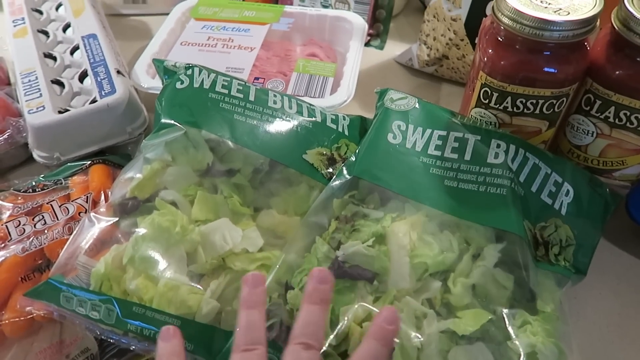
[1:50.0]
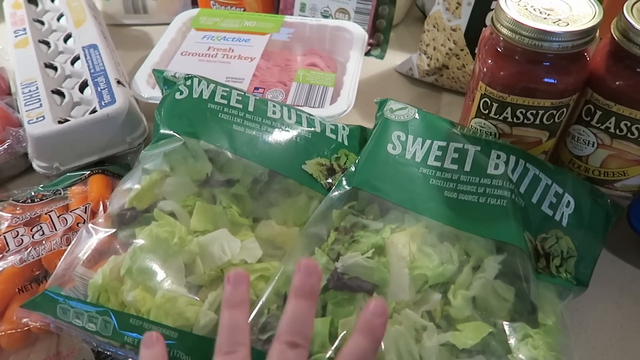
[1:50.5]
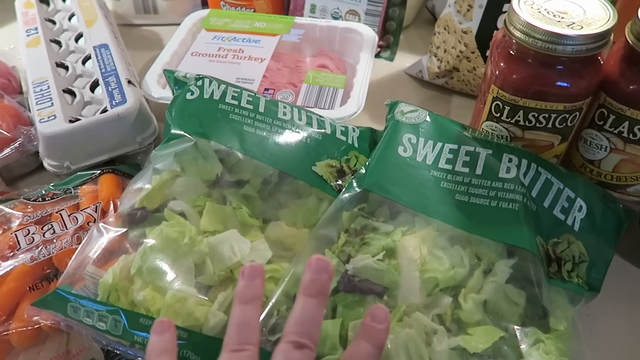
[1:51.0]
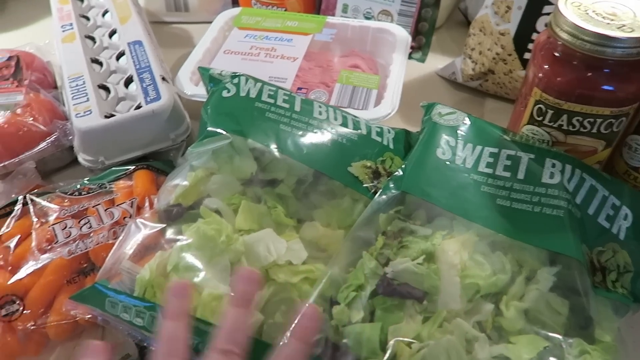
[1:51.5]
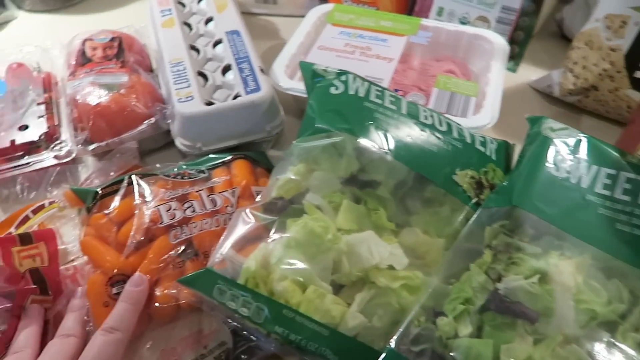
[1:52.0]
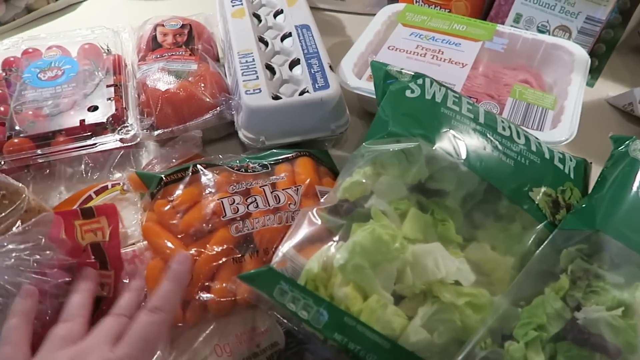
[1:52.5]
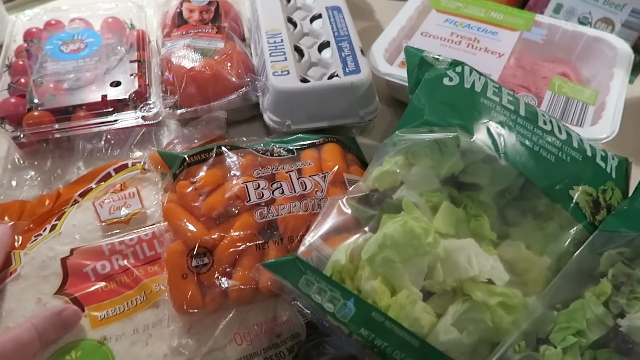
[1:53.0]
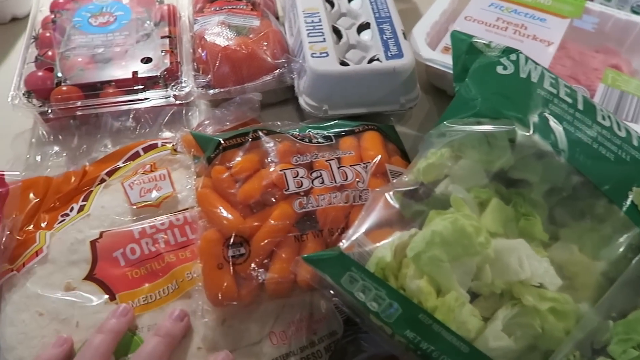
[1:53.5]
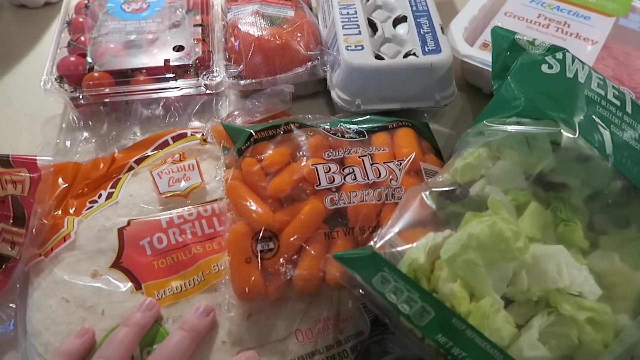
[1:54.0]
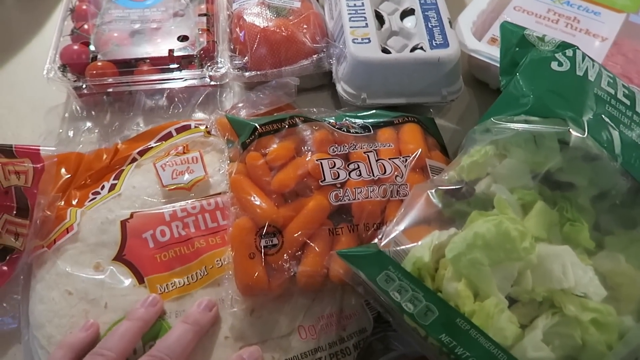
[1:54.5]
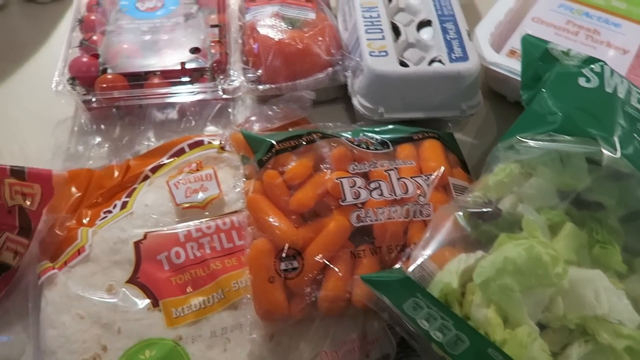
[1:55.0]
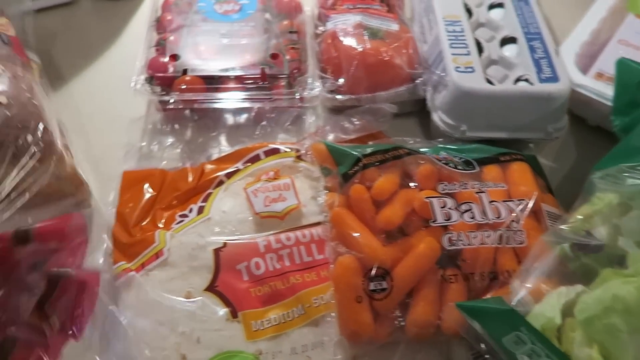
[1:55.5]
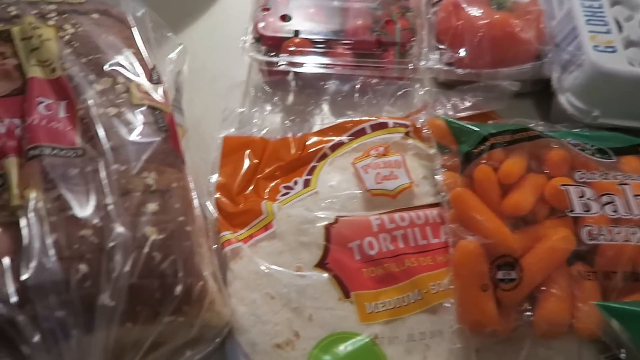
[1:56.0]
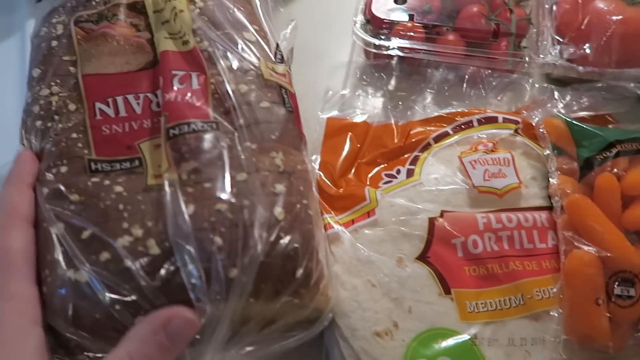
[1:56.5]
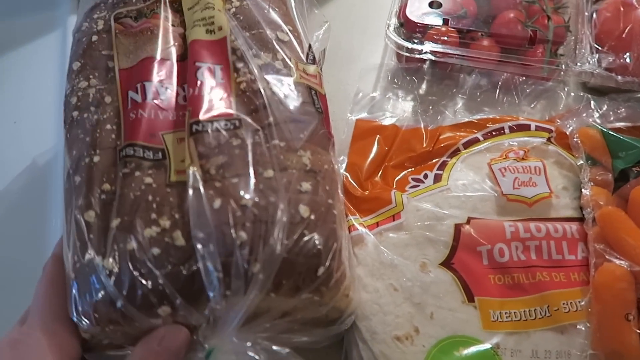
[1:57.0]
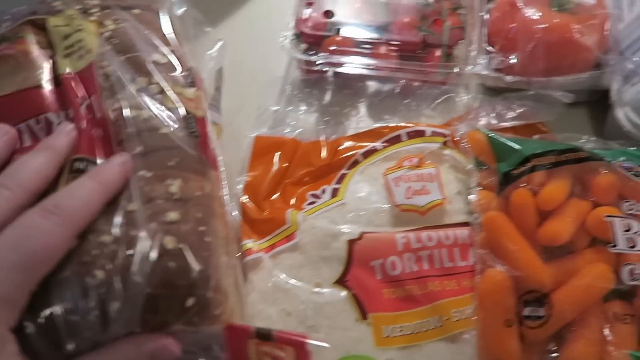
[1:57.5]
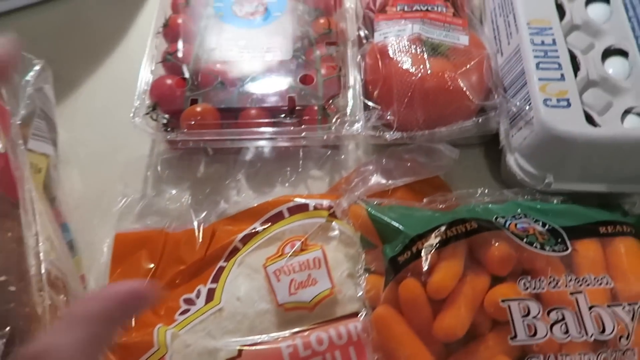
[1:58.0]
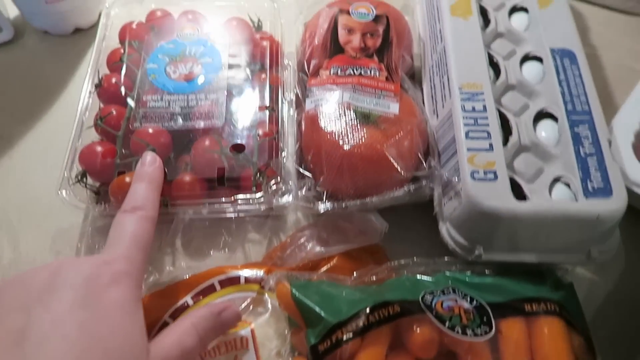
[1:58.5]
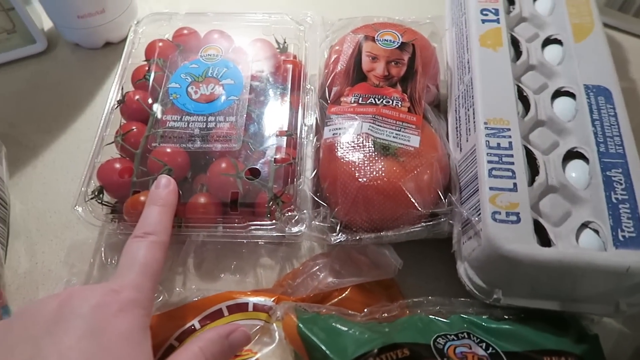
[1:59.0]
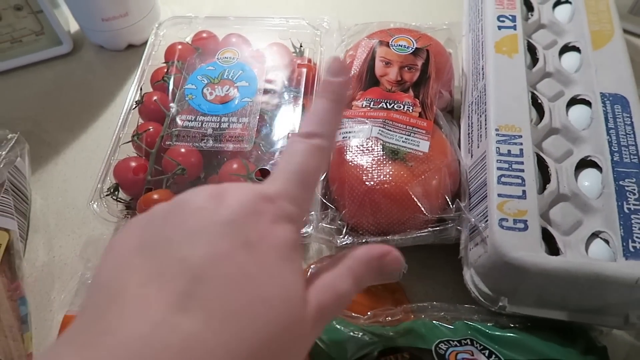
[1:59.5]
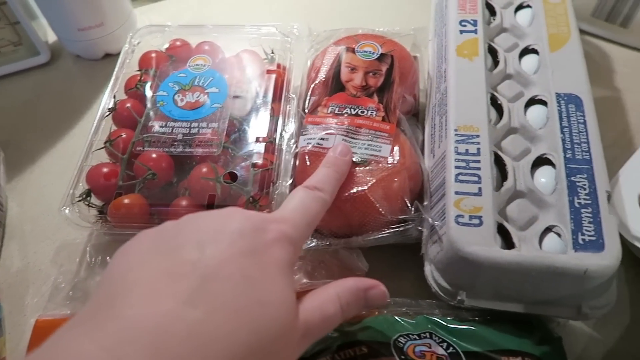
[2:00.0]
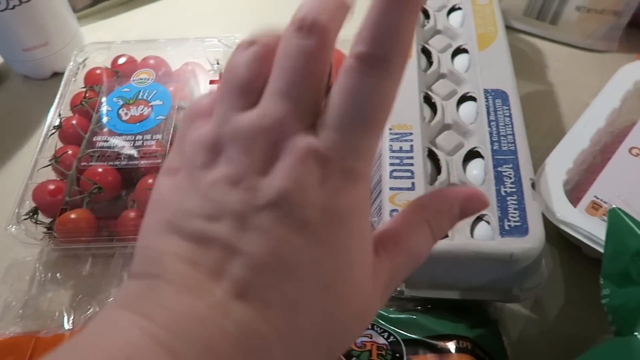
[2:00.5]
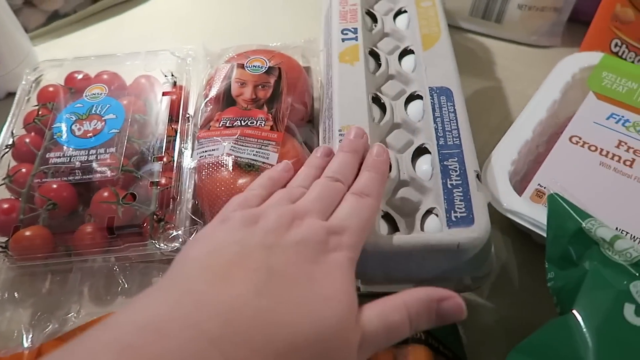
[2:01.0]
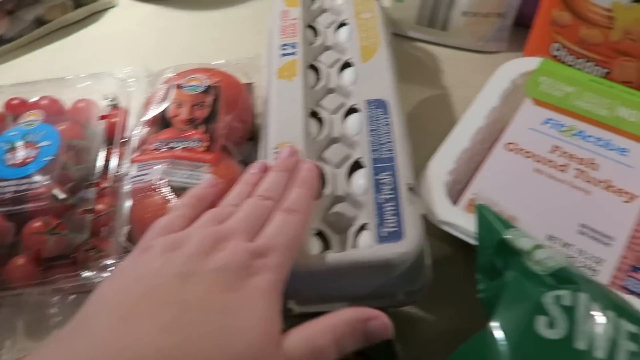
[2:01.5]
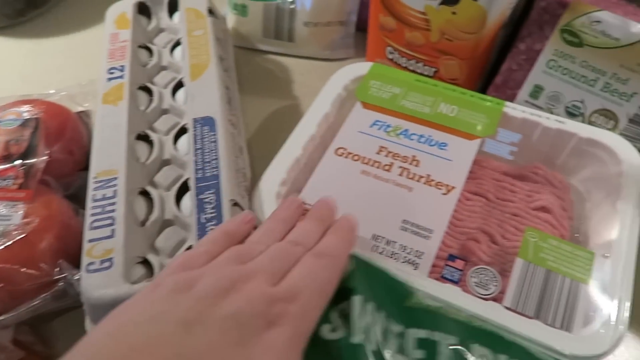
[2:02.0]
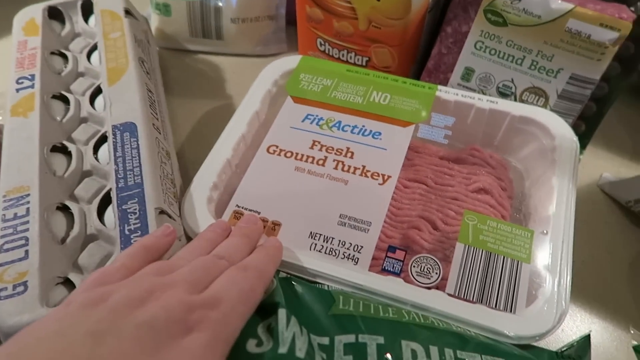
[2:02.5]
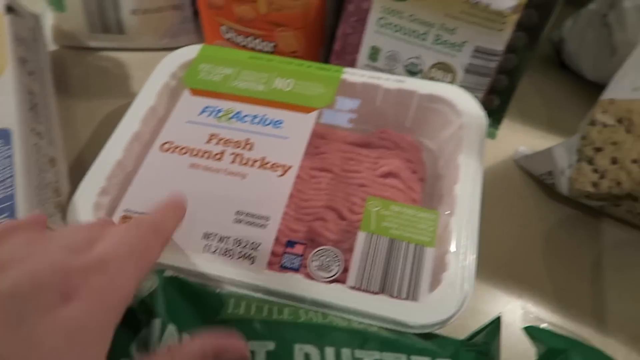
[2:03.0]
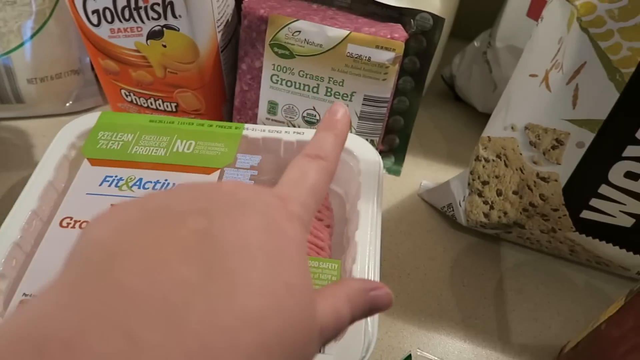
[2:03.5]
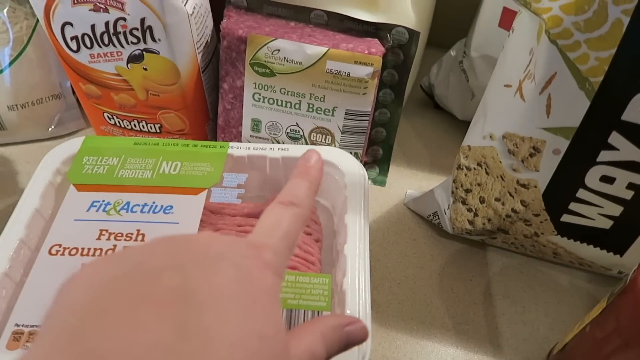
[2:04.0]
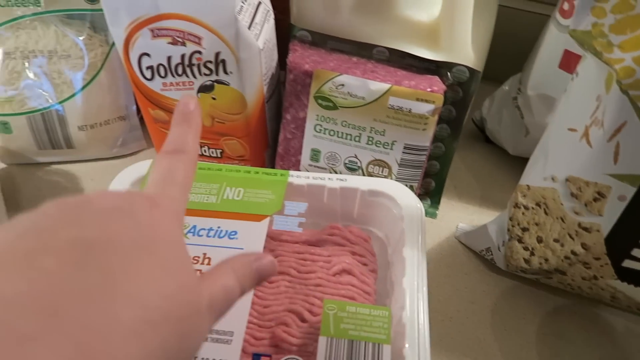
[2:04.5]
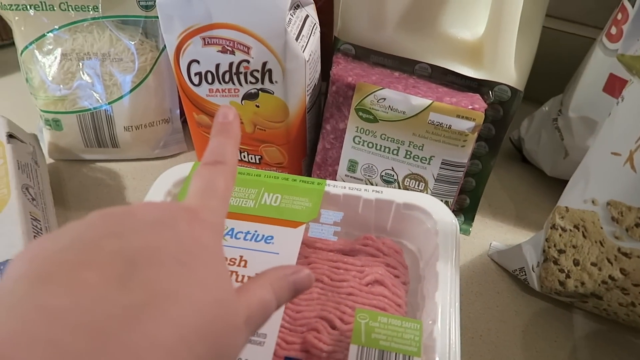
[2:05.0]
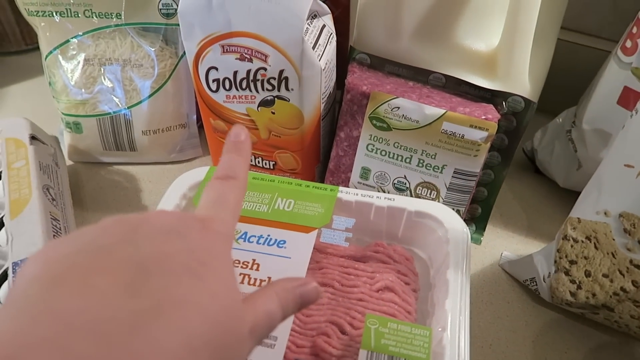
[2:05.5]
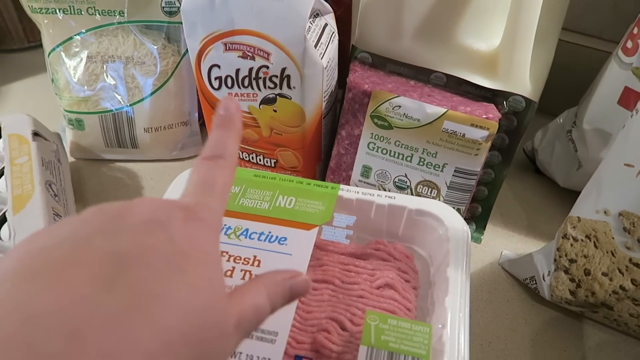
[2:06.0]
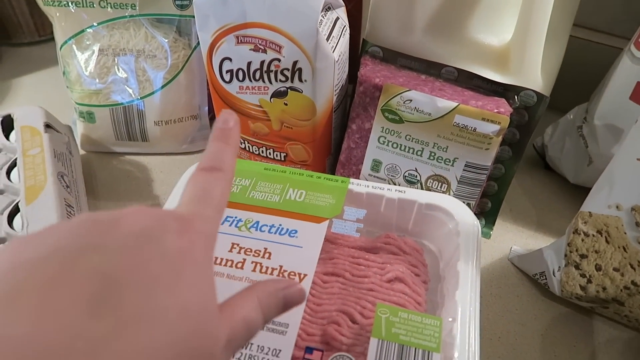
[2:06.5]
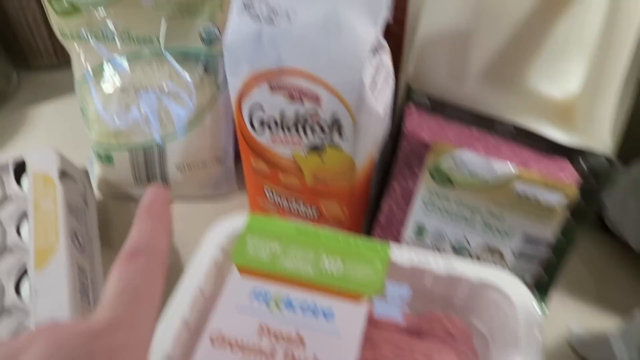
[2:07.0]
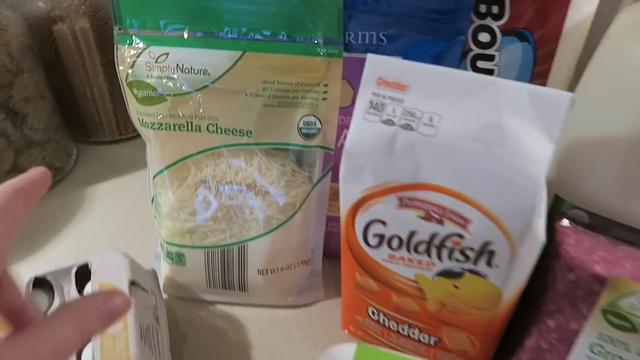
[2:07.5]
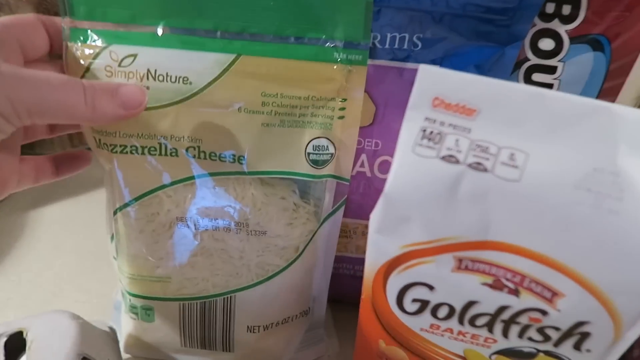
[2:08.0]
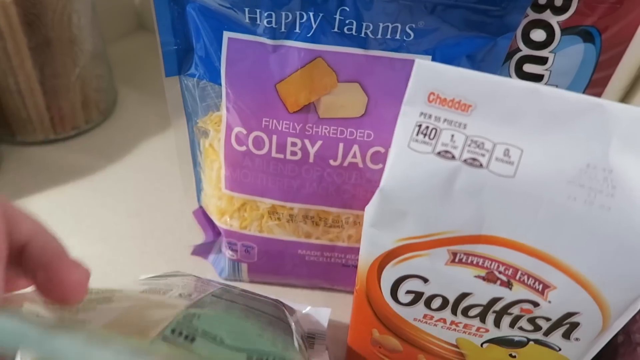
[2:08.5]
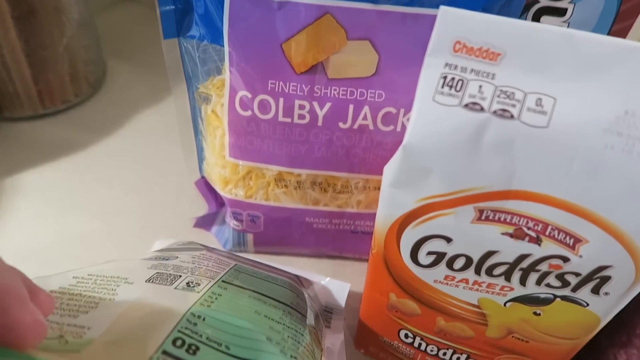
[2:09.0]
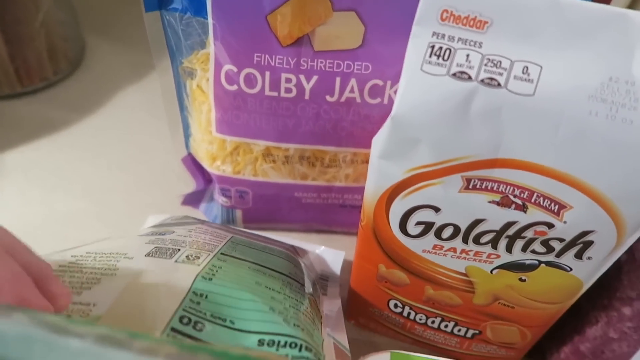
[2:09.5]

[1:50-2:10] Next to the lettuce is a bag of baby carrots, and the hand moves something across the counter to reveal a pack of flour tortillas. There is also a loaf of bread that looks like good-quality bread, possibly wholemeal judging by the colour of the crust. The hand taps a tub of vine cherry tomatoes, and next to them is a pack of what looks like two large beef tomatoes with the word "flavour" on the front. The hand then taps a box of 12 eggs, all white, visible through a little window in the top of the carton; the logo reads "Farm Fresh". Next comes a 1.2-pound pack of fit and active fresh ground turkey; behind it are a package of 100 percent grass-fed ground beef and a package of cheddar flavor goldfish crackers. There is a bag of shredded mozzarella, and the hand moves it away to reveal another bag of shredded Colby Jack; both are finely shredded.